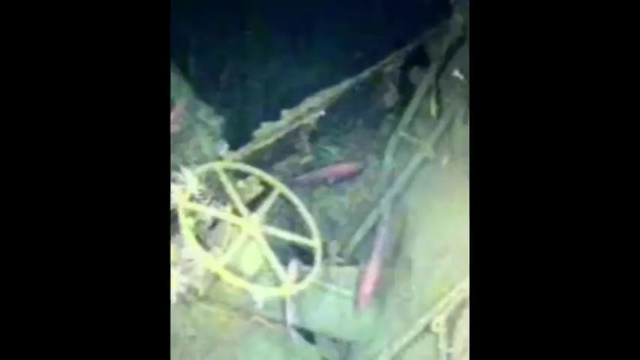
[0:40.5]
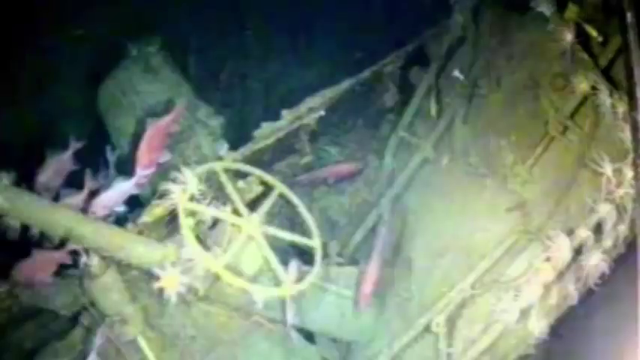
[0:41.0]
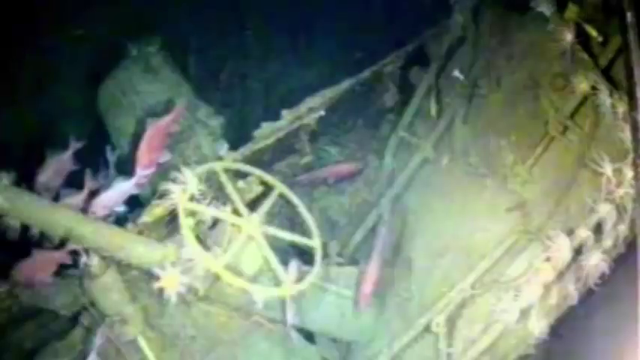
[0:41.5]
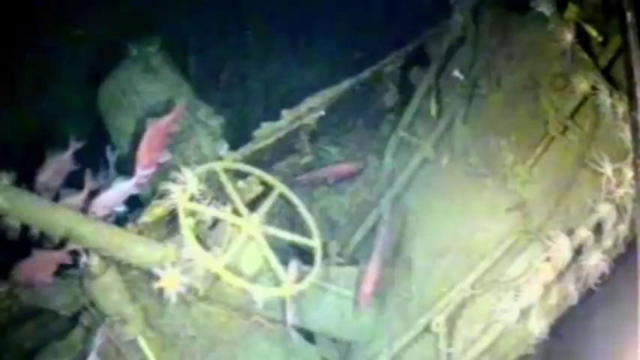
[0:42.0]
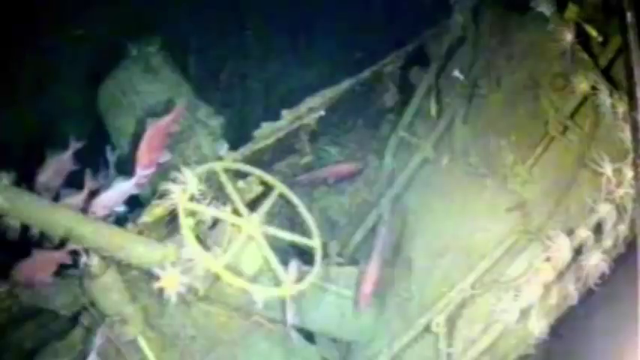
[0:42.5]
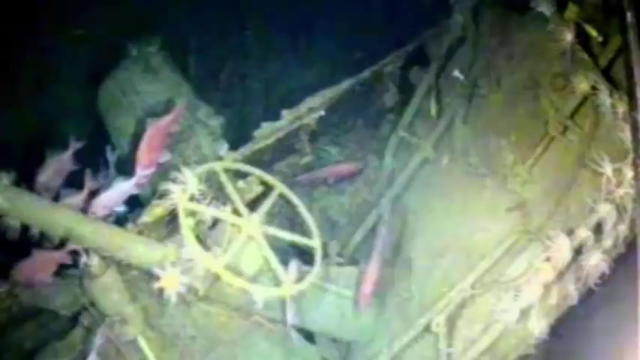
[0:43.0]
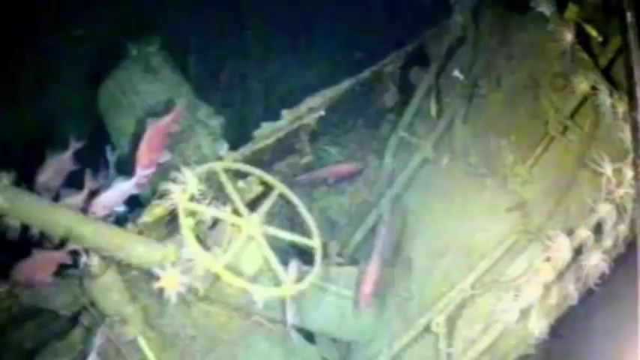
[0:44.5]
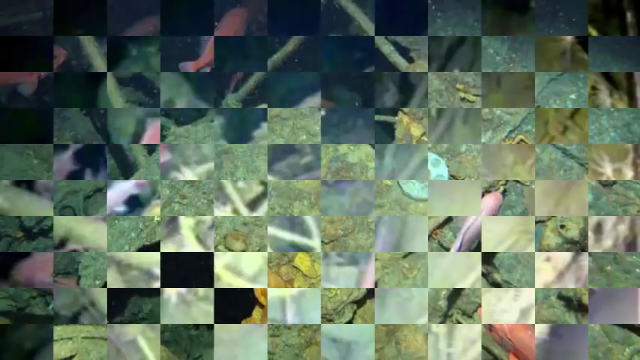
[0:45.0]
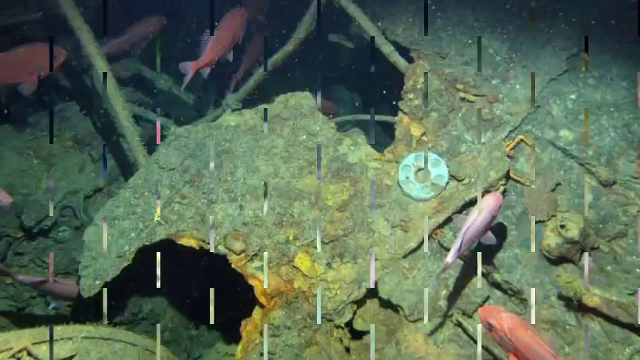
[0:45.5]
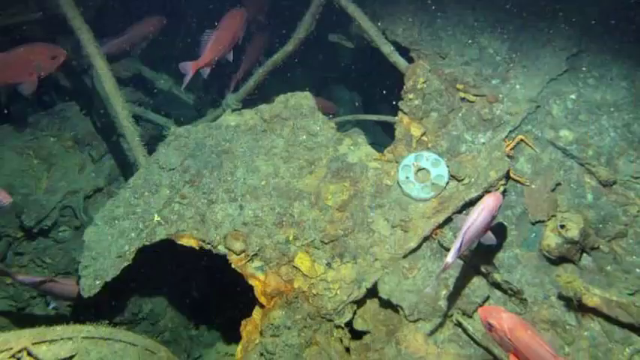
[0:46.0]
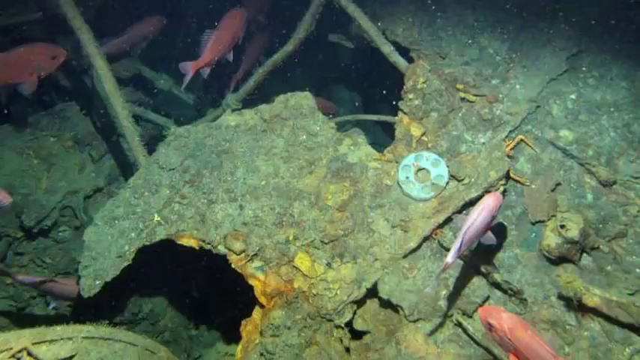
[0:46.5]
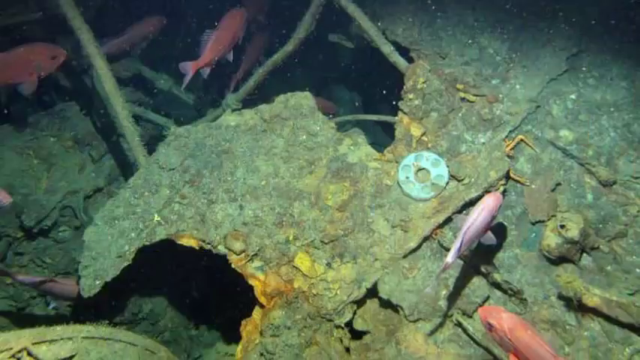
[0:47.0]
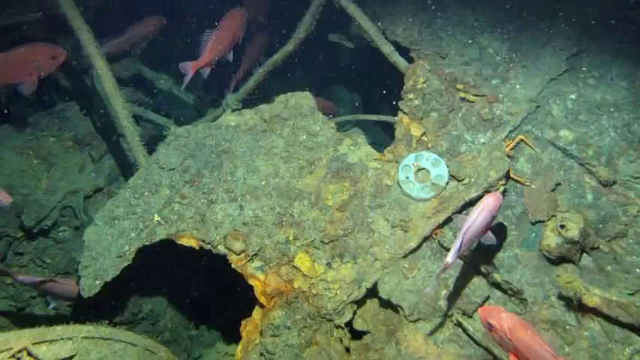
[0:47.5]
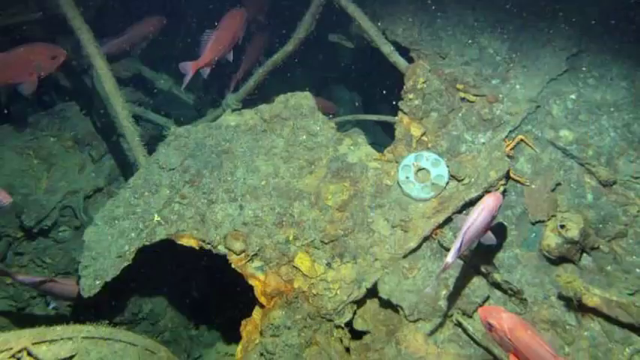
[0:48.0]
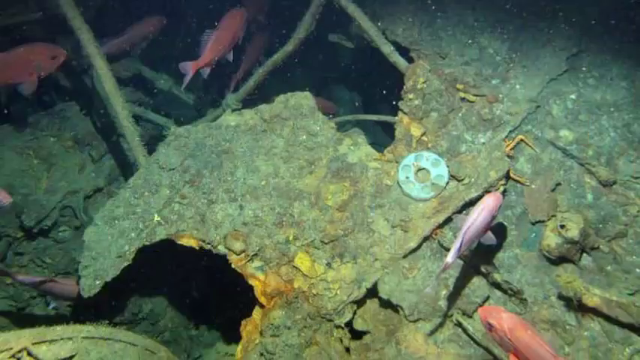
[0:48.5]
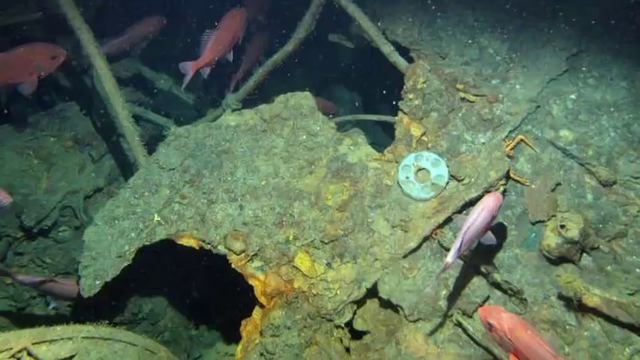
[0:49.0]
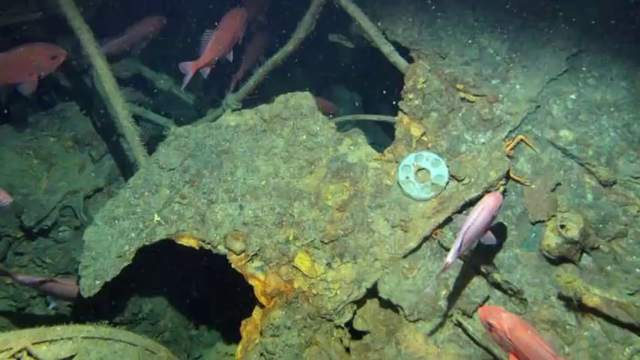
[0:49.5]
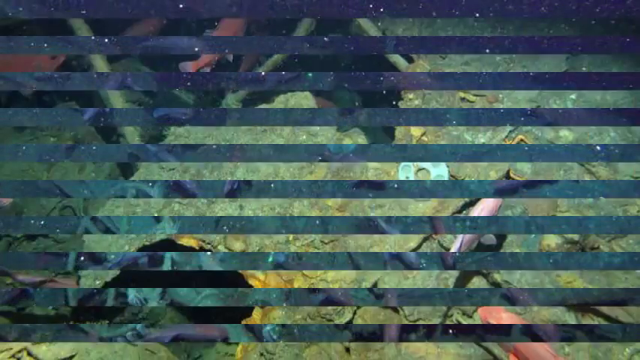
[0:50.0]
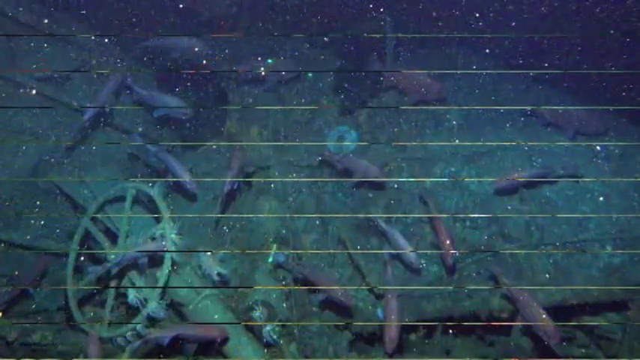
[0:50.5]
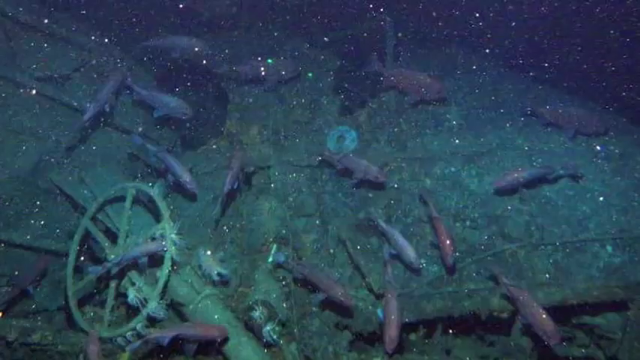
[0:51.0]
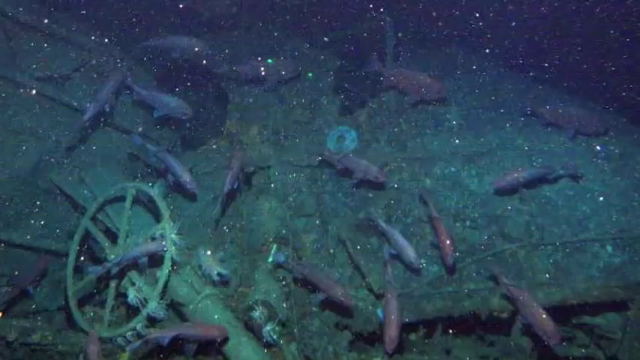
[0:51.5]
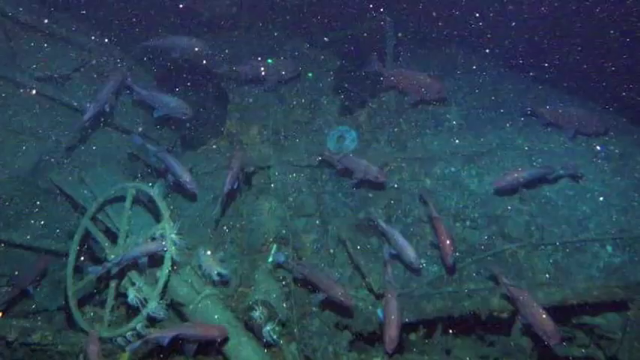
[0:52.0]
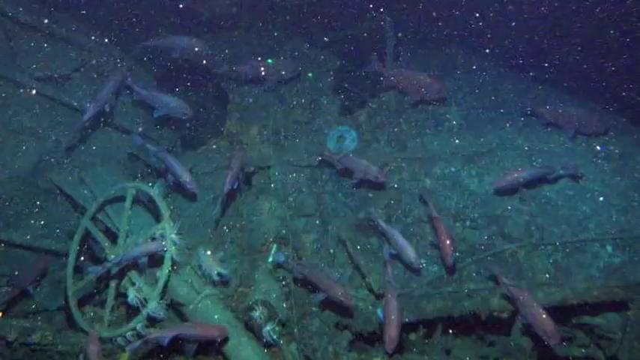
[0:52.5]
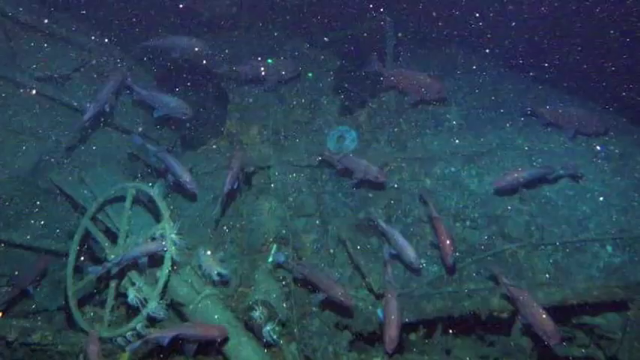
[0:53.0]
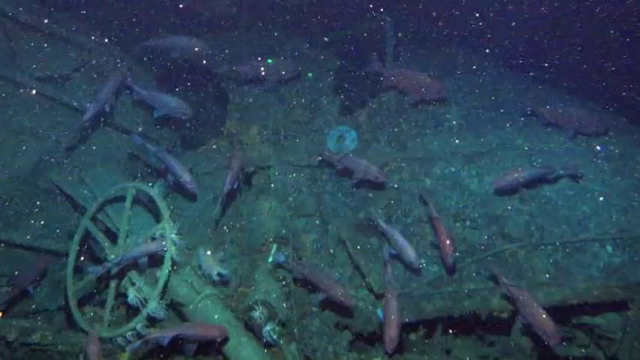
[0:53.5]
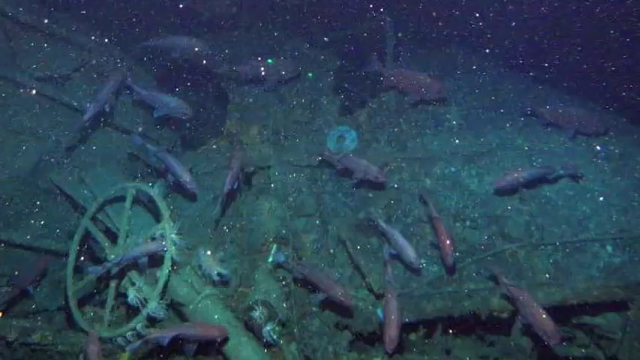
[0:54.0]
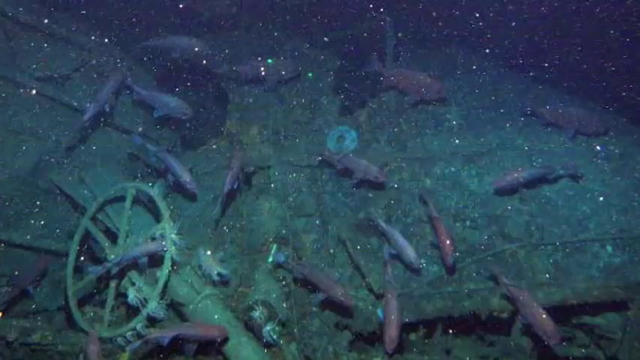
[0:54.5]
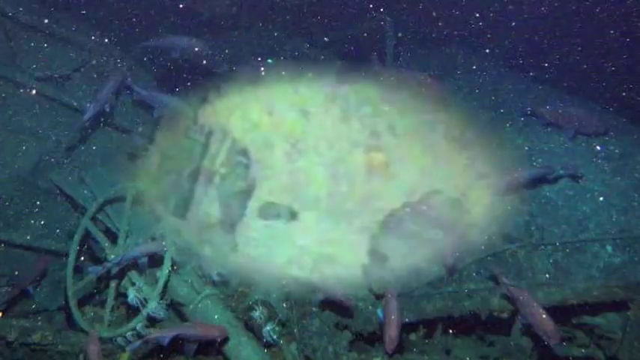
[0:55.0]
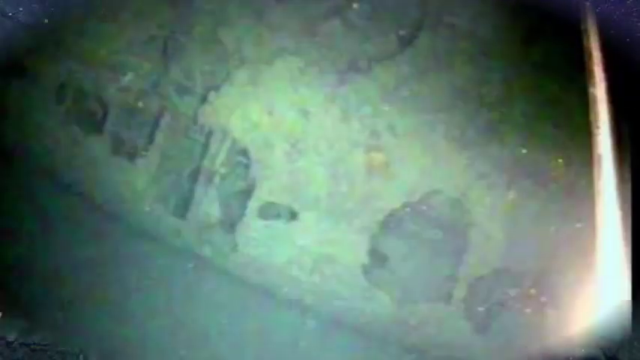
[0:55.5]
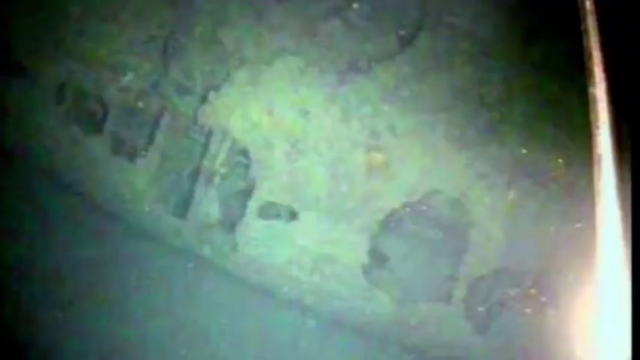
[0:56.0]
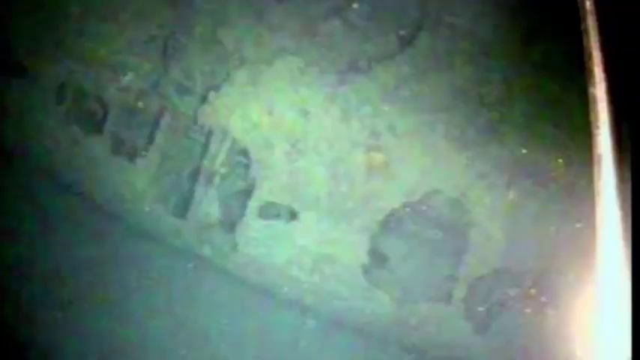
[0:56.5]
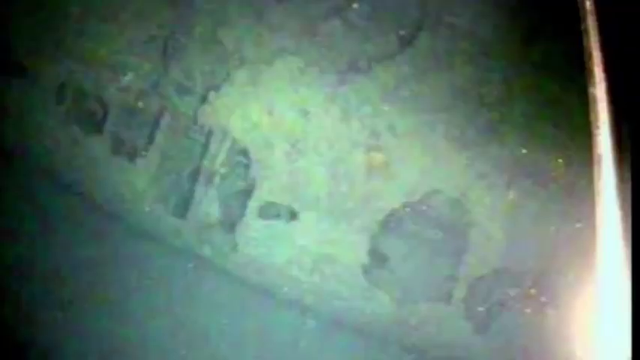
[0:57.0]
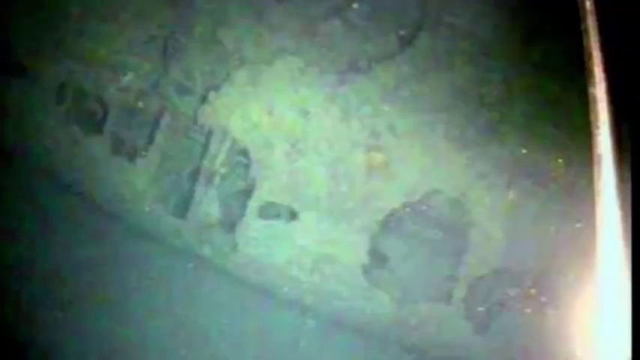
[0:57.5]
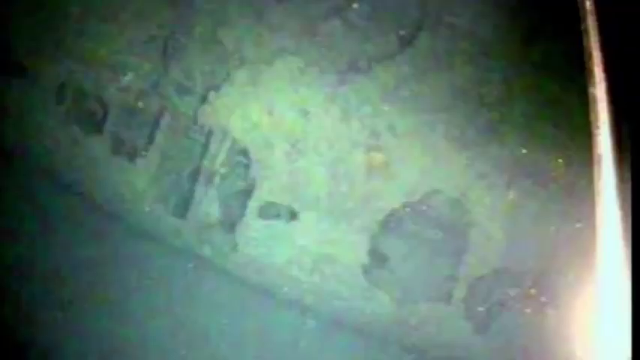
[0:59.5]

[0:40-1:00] A top-down angle shows the boat and its steering wheel, with a mast to the left of the wheel pointing upward toward the left border of the screen. Red and white fish swim around, and white spider-like growths cover the boat, on the hull near the right side of the screen, on the steering wheel and all over. Some cylindrical metal supports are visible. A grid-shaped transition then shows an image with a donut-shaped metallic circular plate in the center of the screen, with barnacles surrounding all parts of the wreckage. Red fish swim in all directions, and white dots are slightly visible along the top half of the screen, possibly smaller organisms or reflections of light from underwater flash photography. Next, a darker image shows a lot of fish along with both the steering wheel and the metal plate; these fish are much darker, dark blue or dark red in color. Another image shows the boat wreckage from the side with a light green tint; there are no distinct features except some evenly spaced vertical columns along the left side of the screen and a bright light in the bottom right corner.